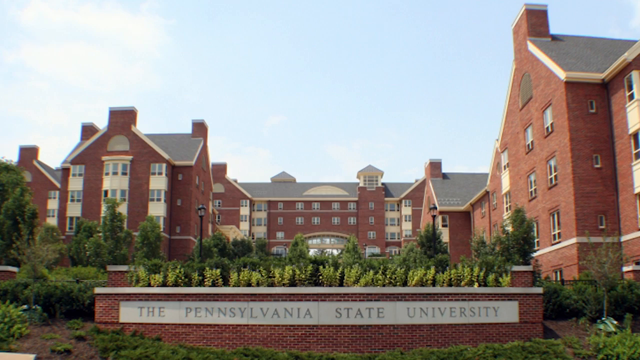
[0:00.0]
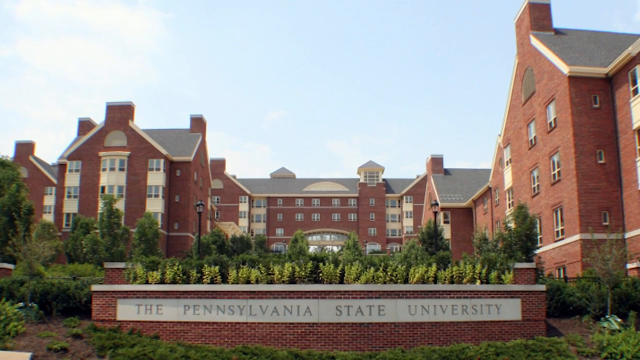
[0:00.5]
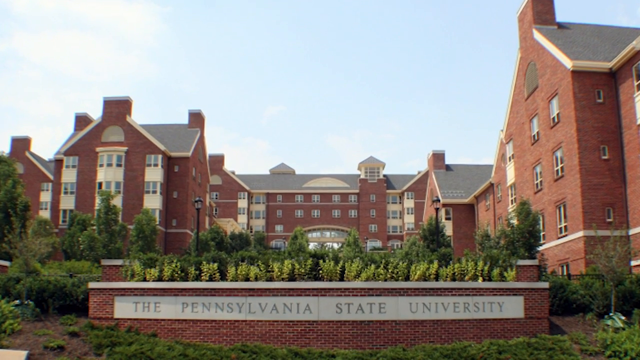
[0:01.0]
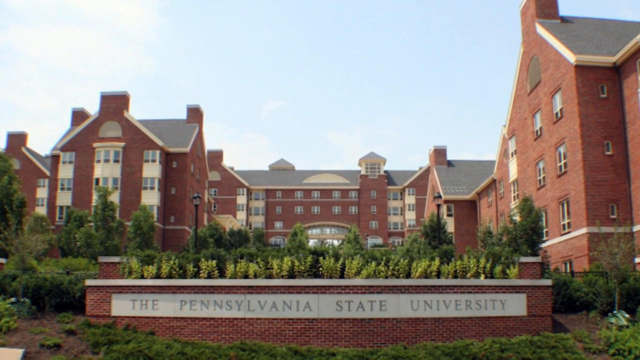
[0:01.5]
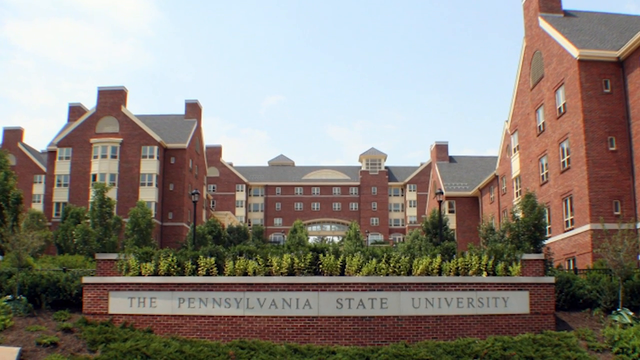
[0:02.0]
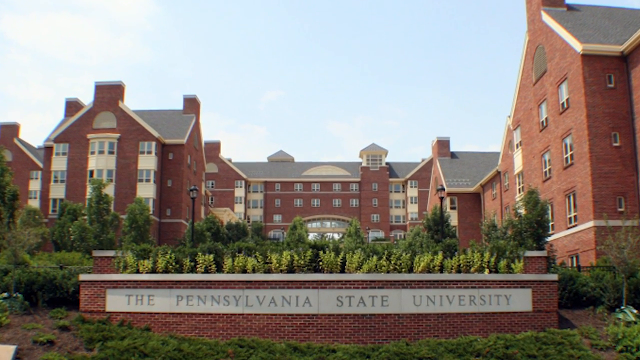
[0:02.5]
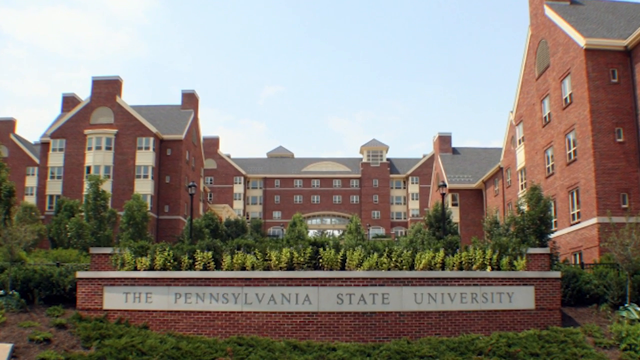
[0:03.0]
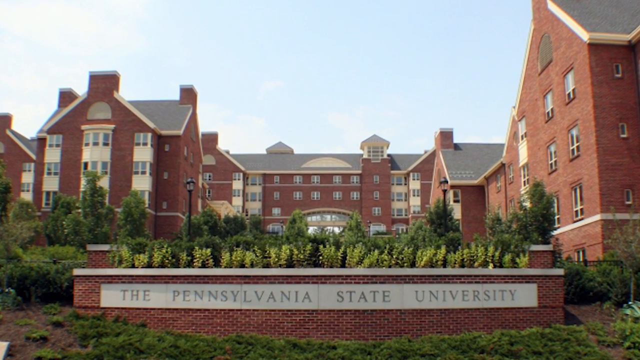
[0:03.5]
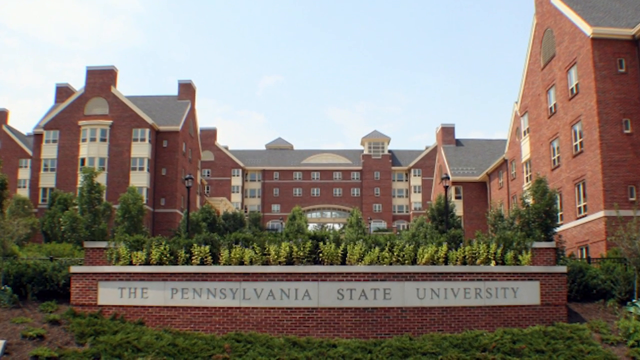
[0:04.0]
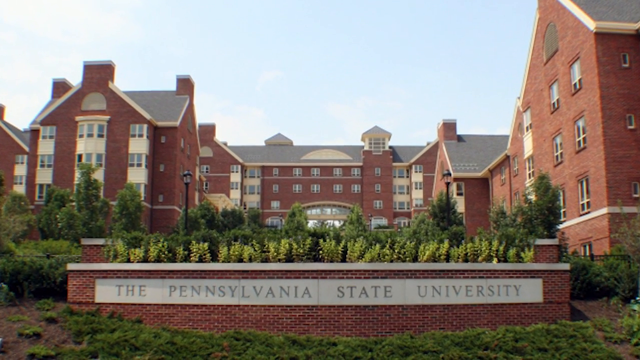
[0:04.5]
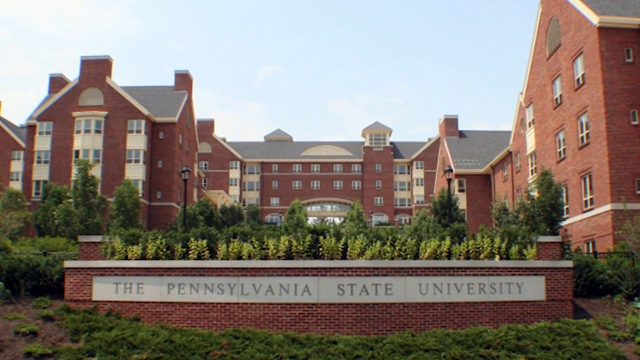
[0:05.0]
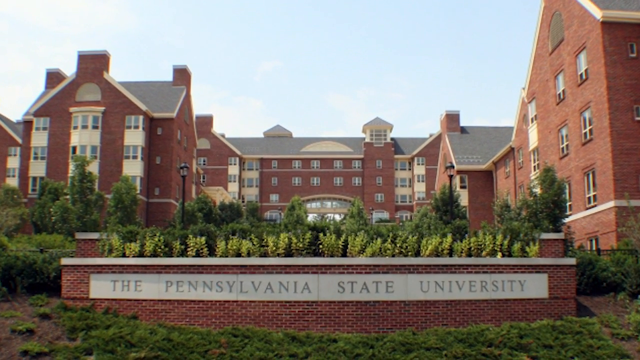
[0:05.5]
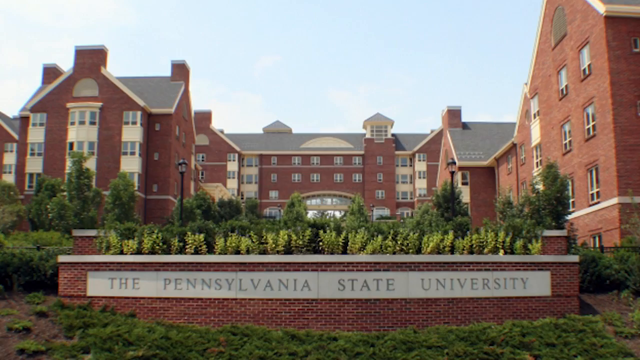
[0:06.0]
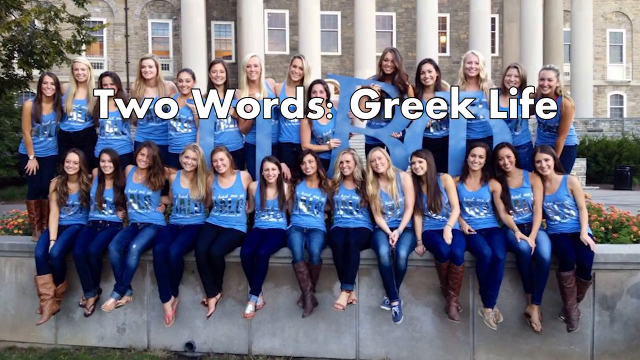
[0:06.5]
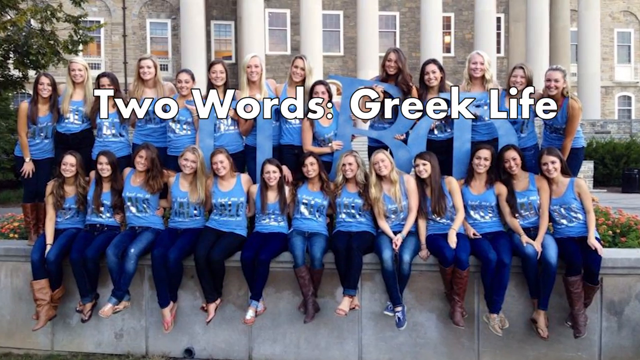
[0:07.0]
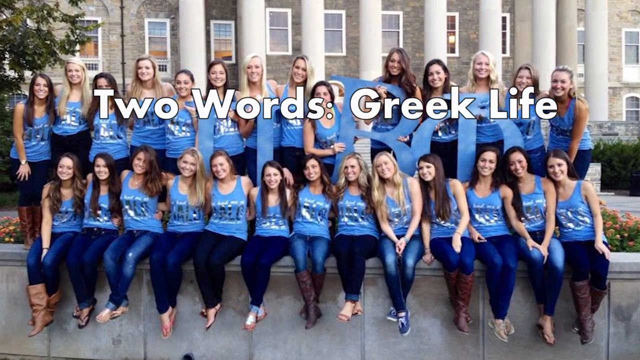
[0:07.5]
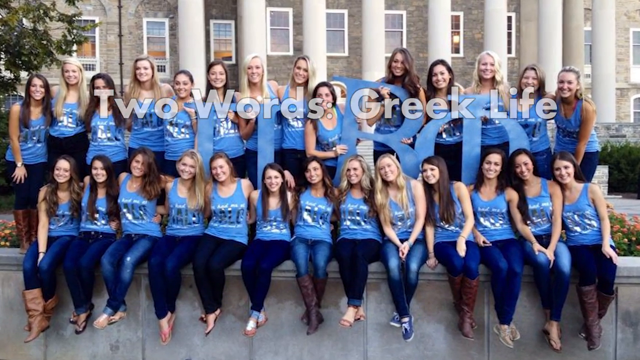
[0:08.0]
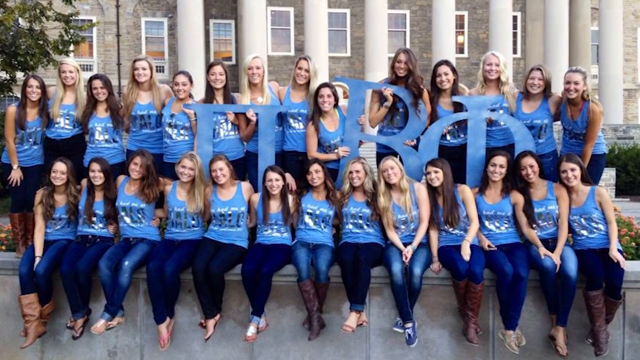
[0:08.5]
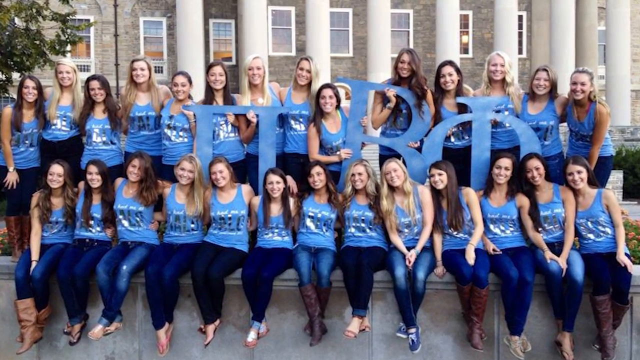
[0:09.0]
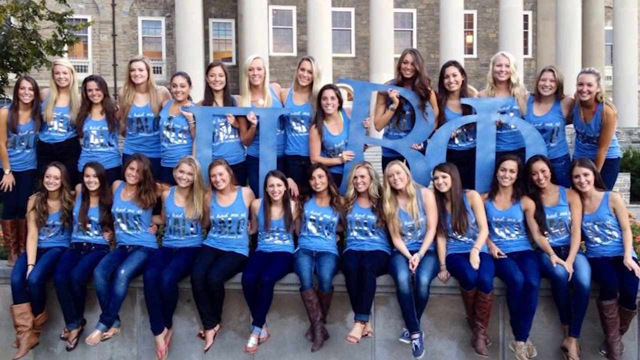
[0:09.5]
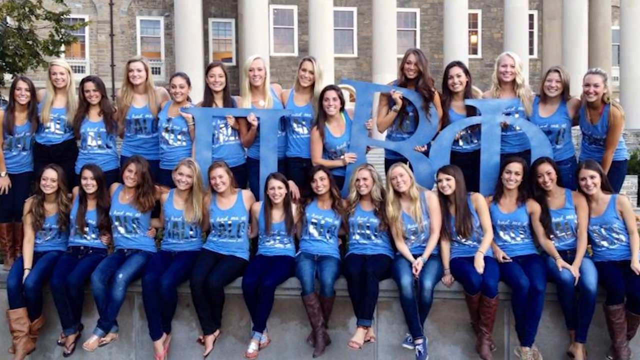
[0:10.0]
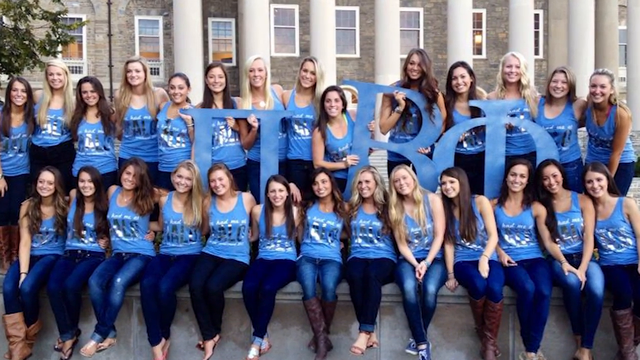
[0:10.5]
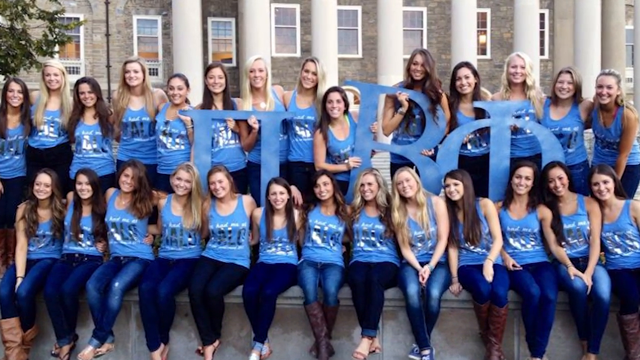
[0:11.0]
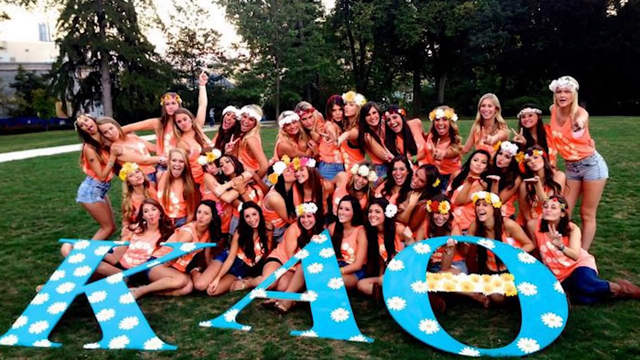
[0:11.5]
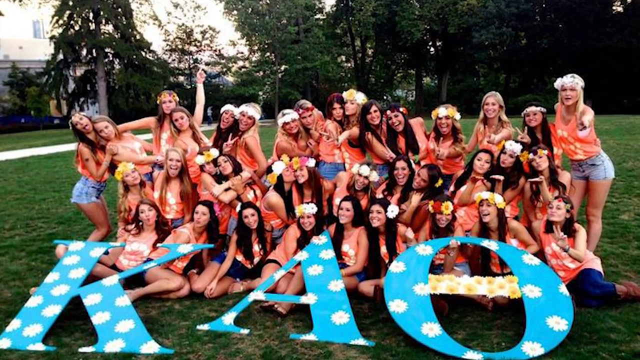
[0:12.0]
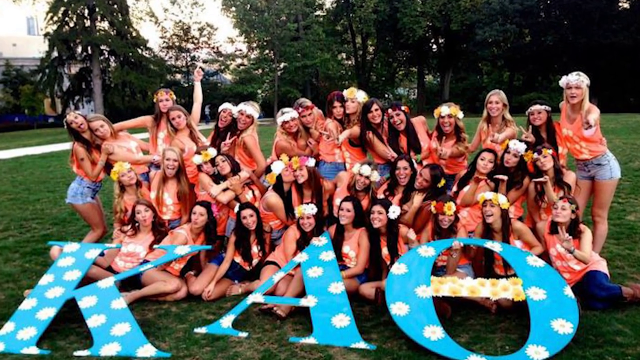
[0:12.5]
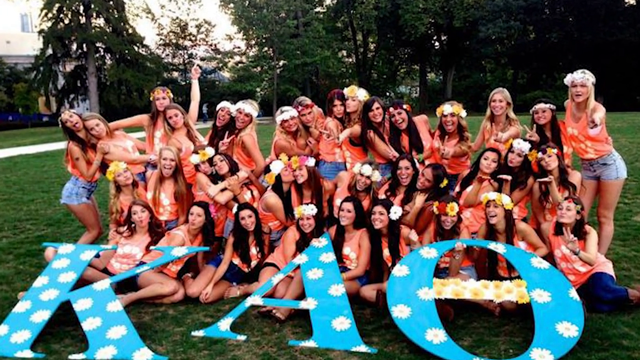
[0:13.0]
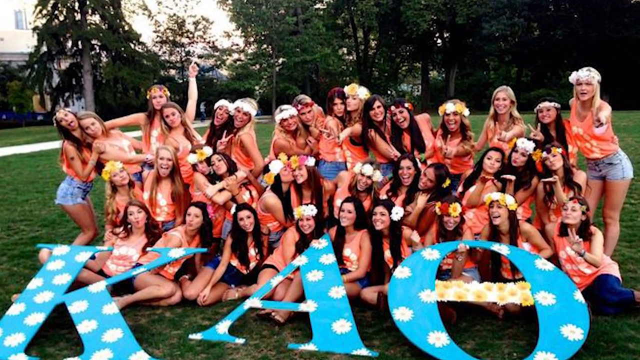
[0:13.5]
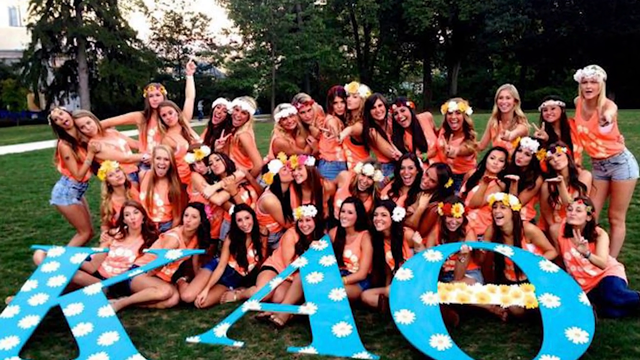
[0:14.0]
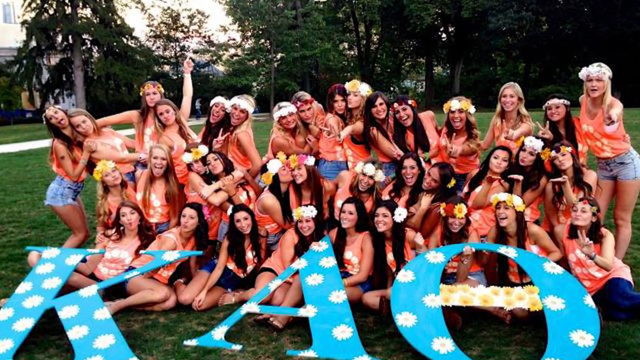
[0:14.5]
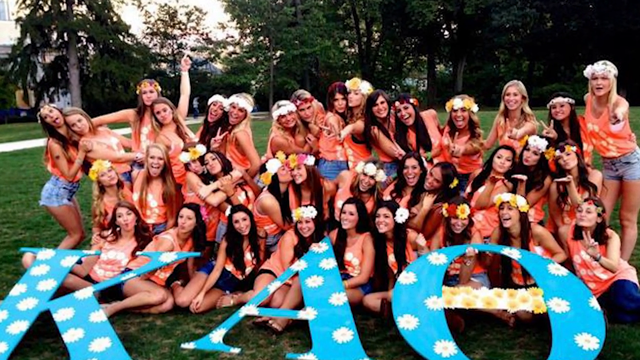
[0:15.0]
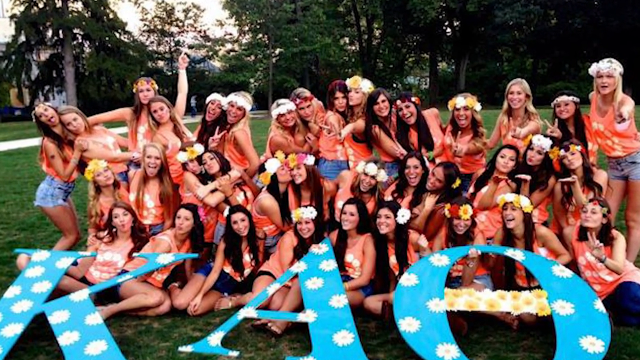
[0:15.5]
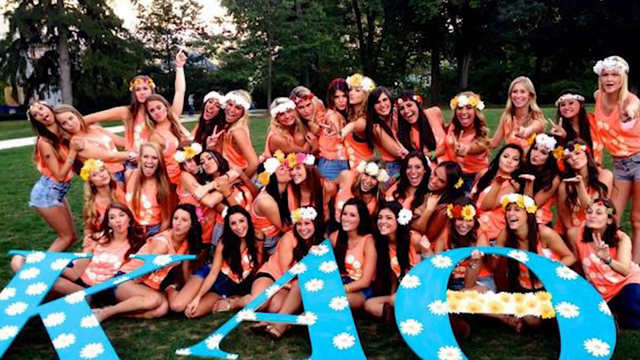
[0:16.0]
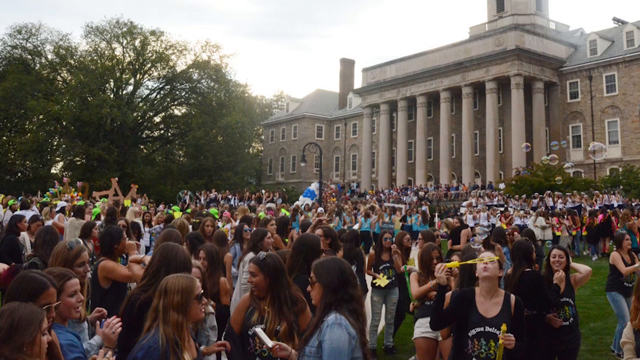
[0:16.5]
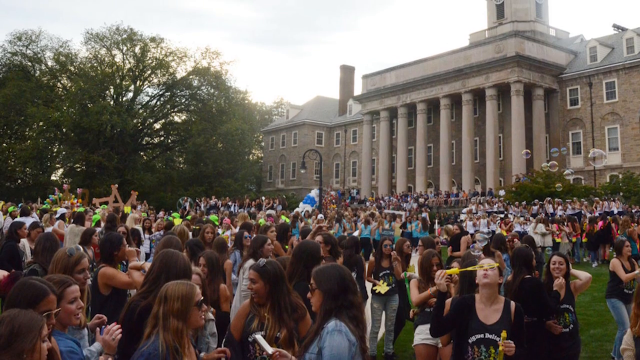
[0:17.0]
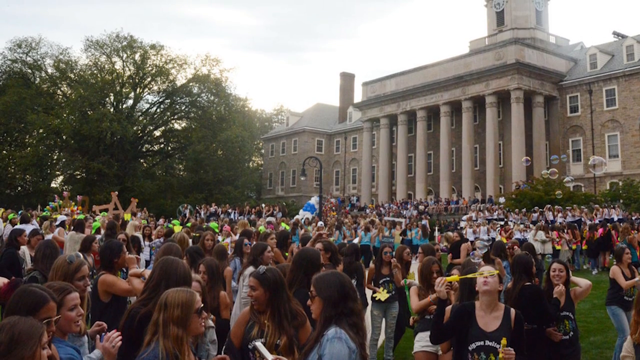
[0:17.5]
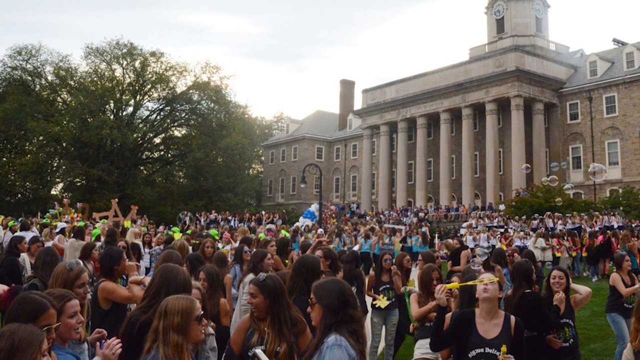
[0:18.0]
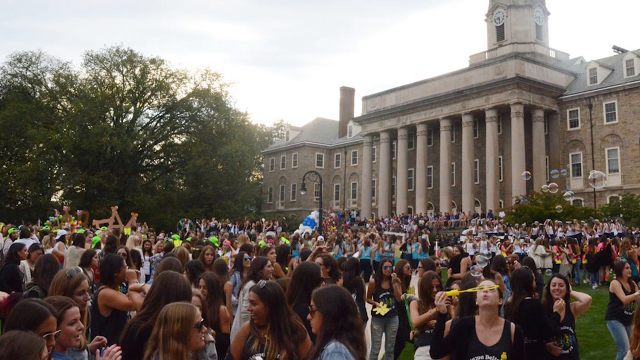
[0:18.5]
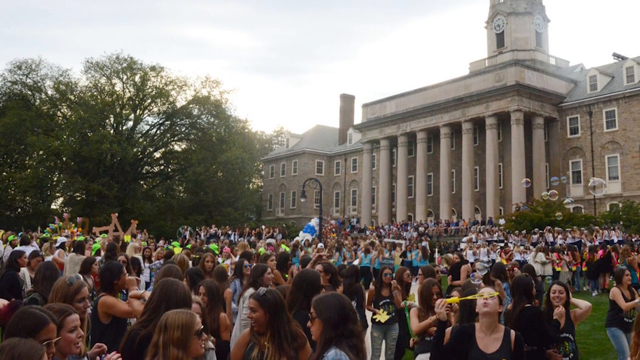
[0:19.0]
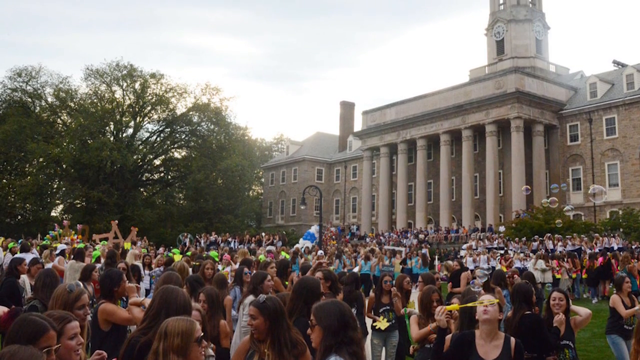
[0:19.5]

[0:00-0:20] The Pennsylvania State University building is seen from the front: a very tall university building with brick walls. Next, a group of women dressed in blue vests and jeans appears with the two-word text "Greek life"; they are arranged in two rows, one row standing and the other sitting. Another image shows the women partying, with the text "cow" in front of it; they are dressed up for a party in short jean shorts and orange vests, with flowers on their heads.